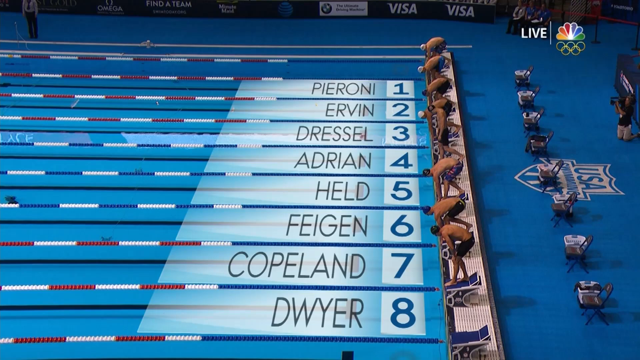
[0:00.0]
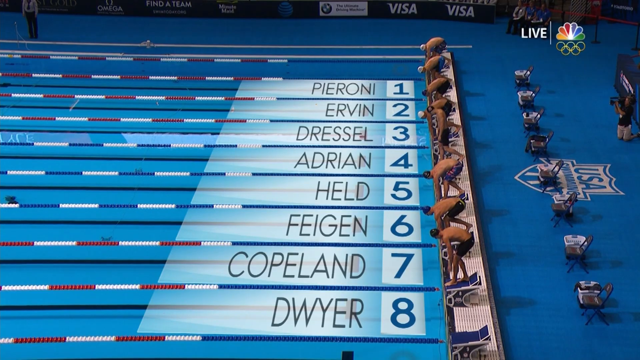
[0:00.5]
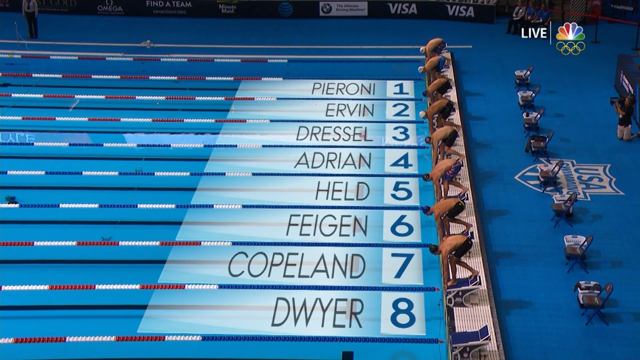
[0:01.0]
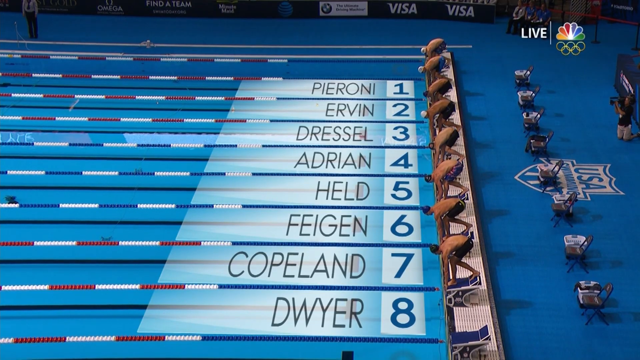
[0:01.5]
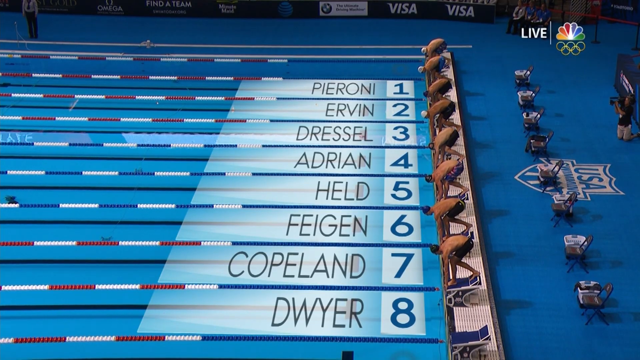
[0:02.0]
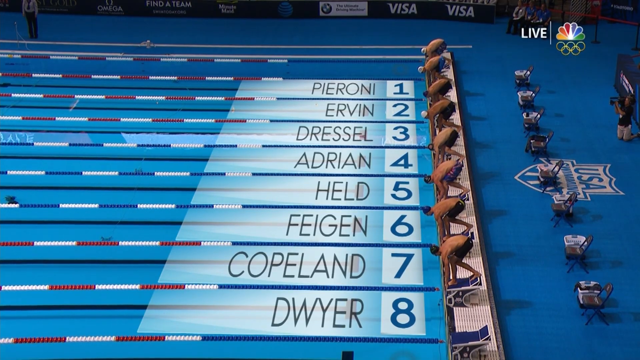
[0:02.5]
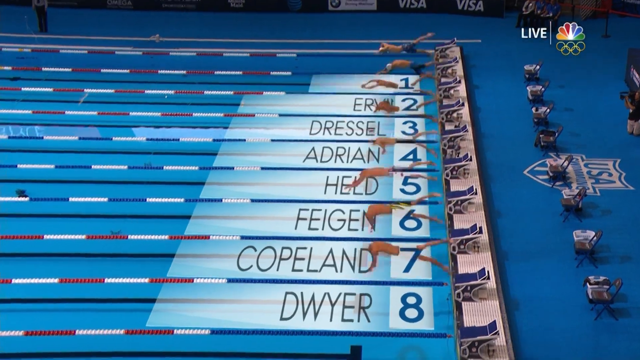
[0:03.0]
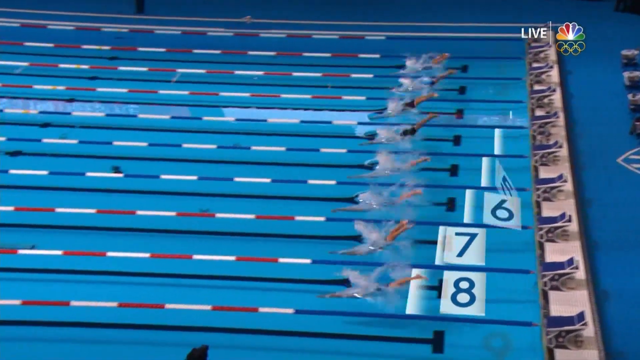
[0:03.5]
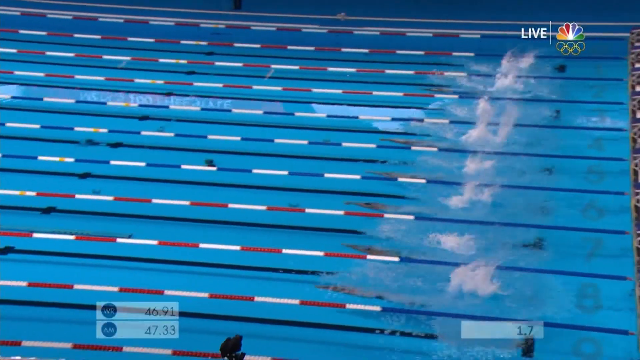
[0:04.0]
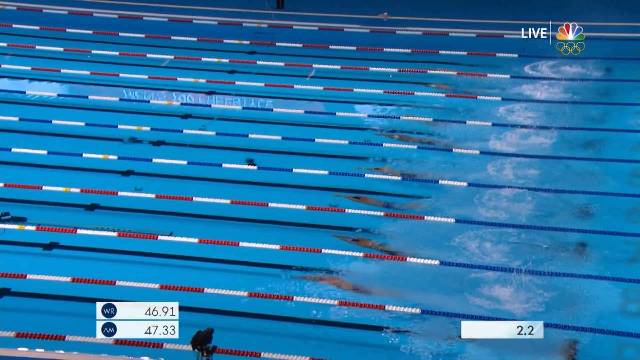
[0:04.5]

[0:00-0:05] A top view shows eight swimmers side by side in an Olympic swimming pool, getting ready to dive in to begin a race. The pool water is blue, and the ground surrounding the pool is also blue. There are chairs behind each of the swimmers. To the right, a camerawoman is on her knees viewing the swimmers. The swimmers are numbered 1 to 8, with their names written beside their numbers. They dive into the pool and all start to swim away. In the lower left corner of the screen, the world record is displayed at 46.91 seconds, along with an American record at 47.33.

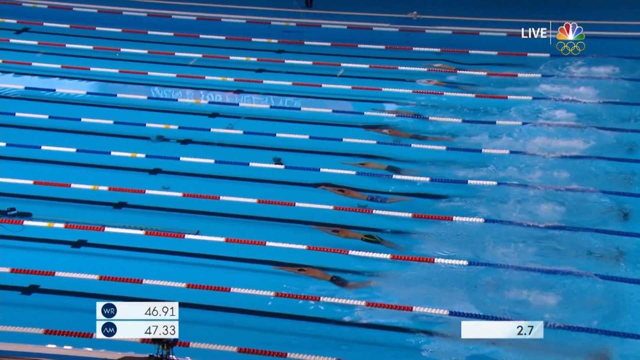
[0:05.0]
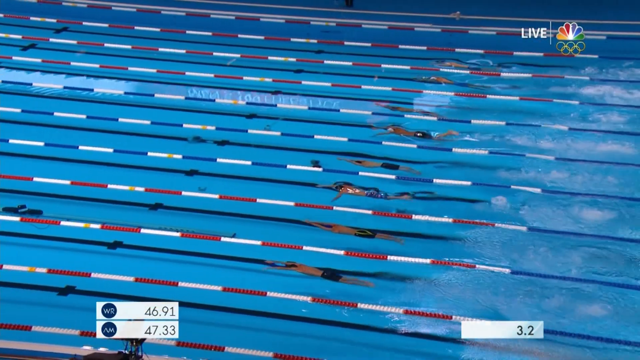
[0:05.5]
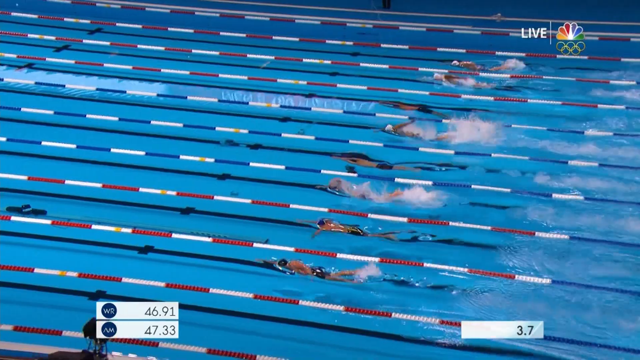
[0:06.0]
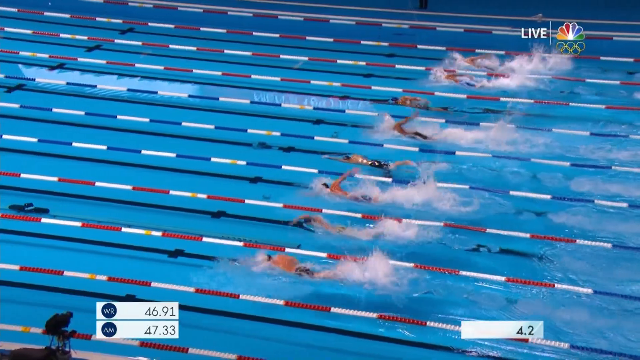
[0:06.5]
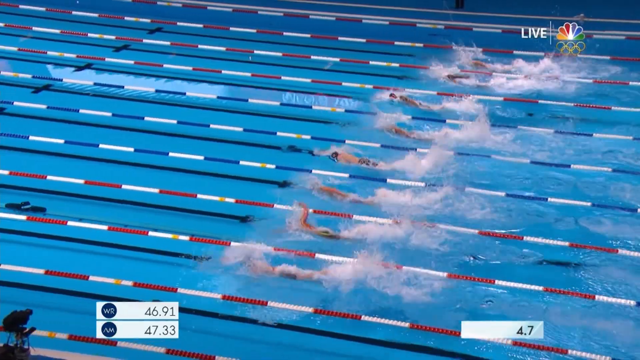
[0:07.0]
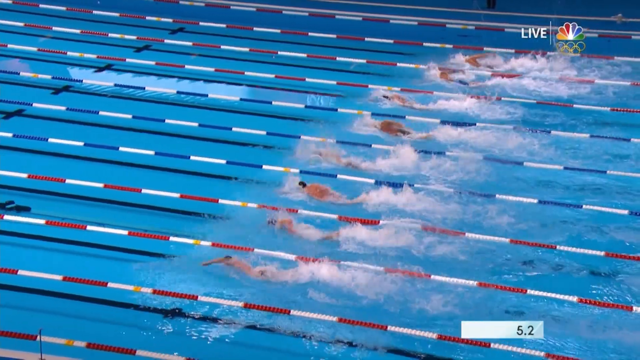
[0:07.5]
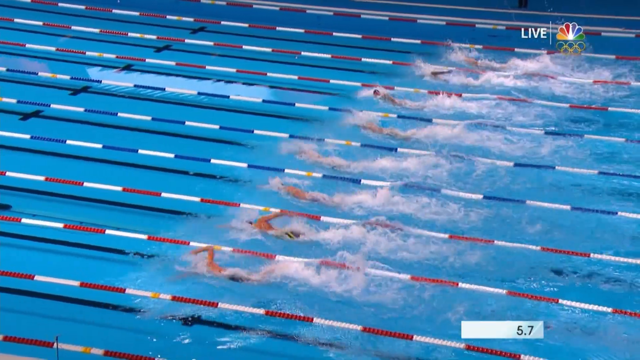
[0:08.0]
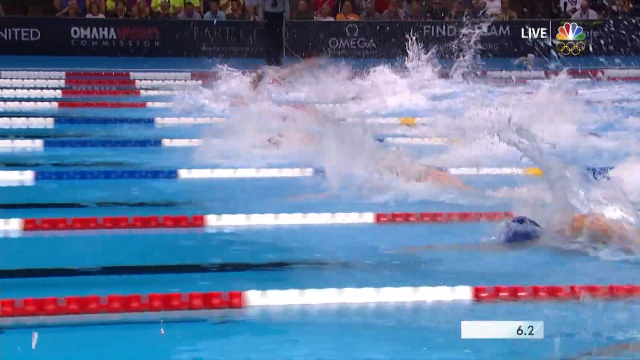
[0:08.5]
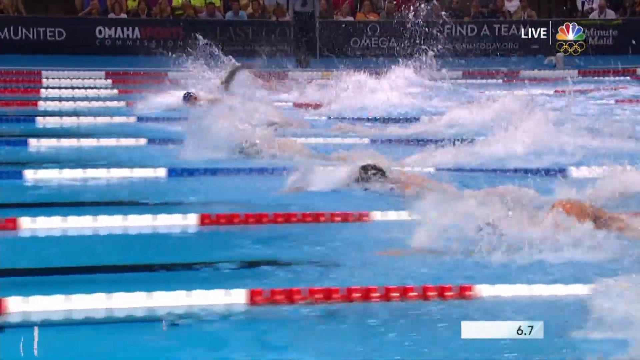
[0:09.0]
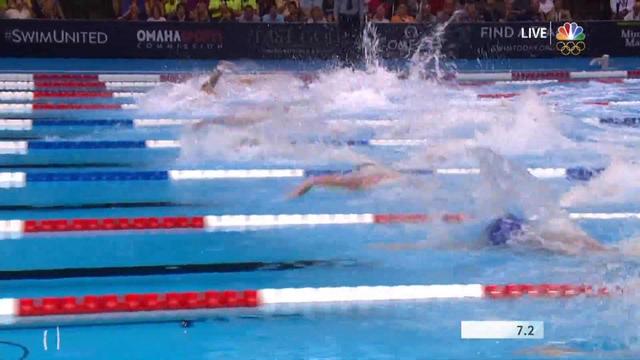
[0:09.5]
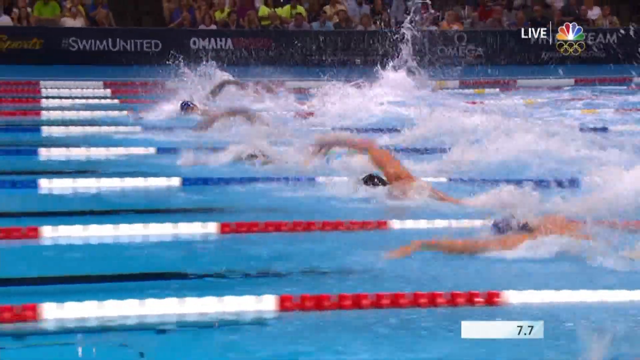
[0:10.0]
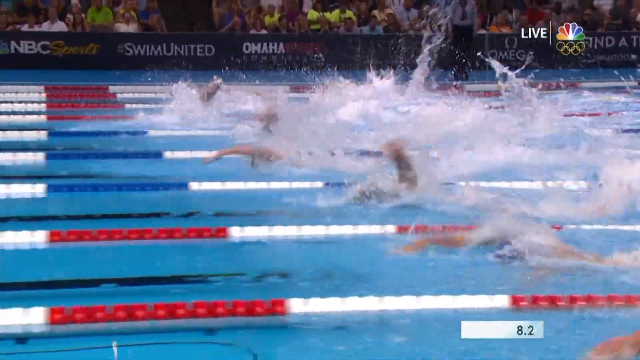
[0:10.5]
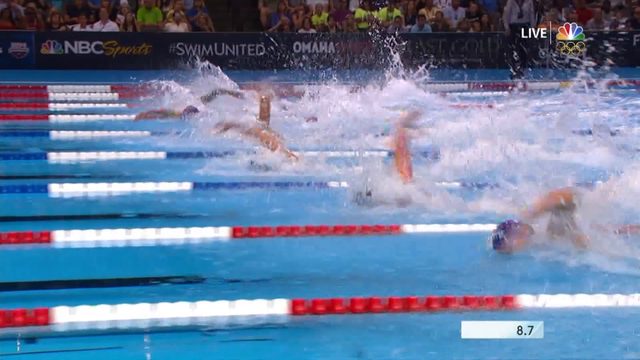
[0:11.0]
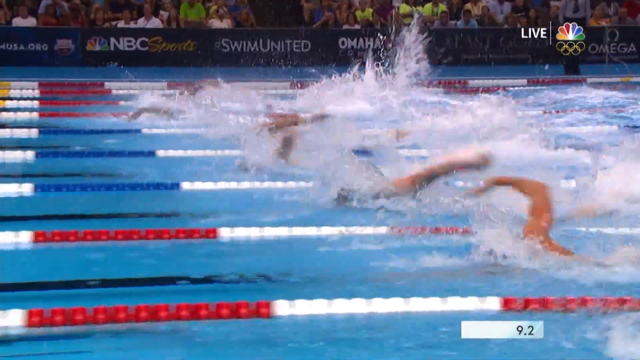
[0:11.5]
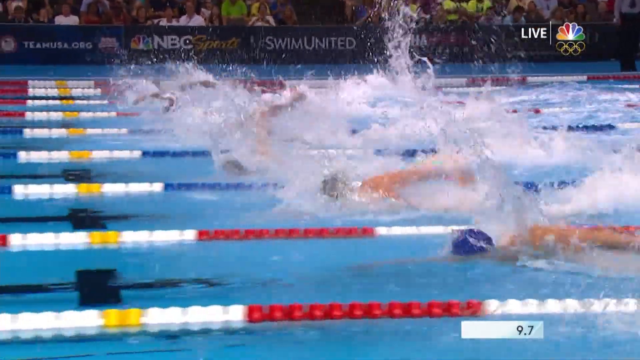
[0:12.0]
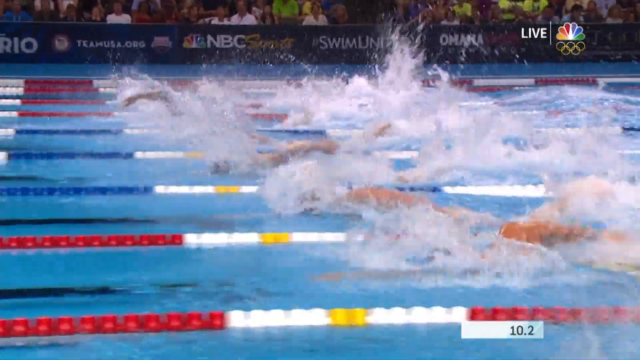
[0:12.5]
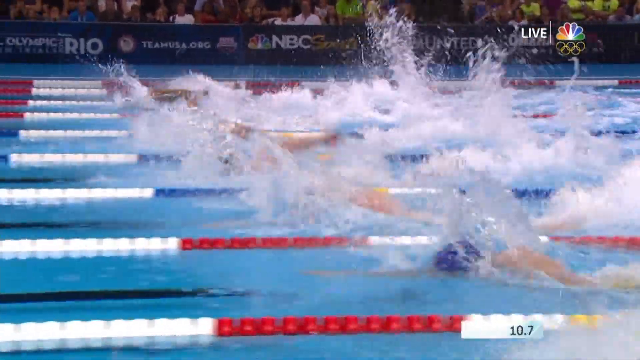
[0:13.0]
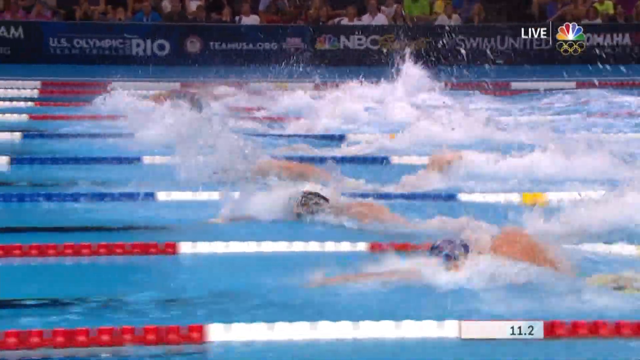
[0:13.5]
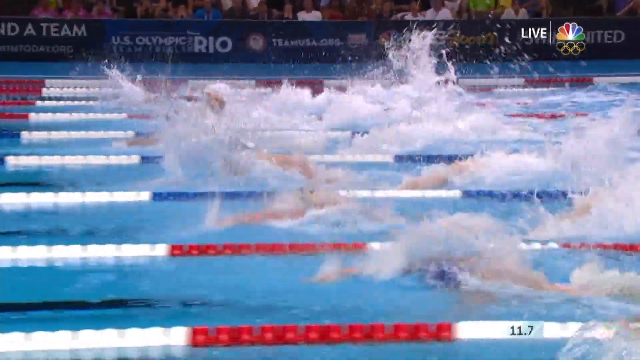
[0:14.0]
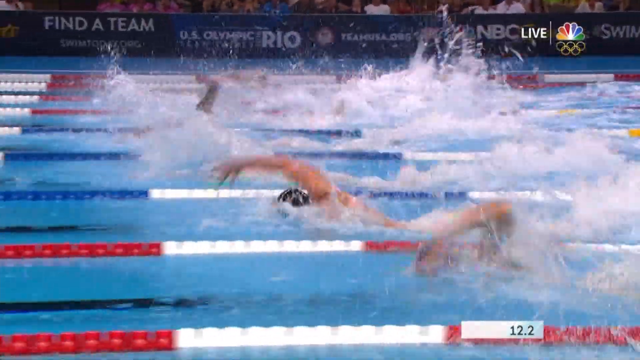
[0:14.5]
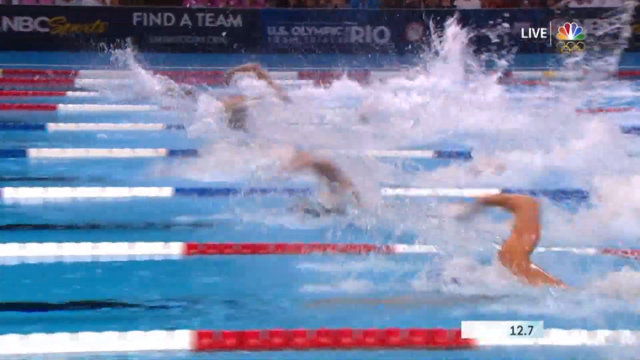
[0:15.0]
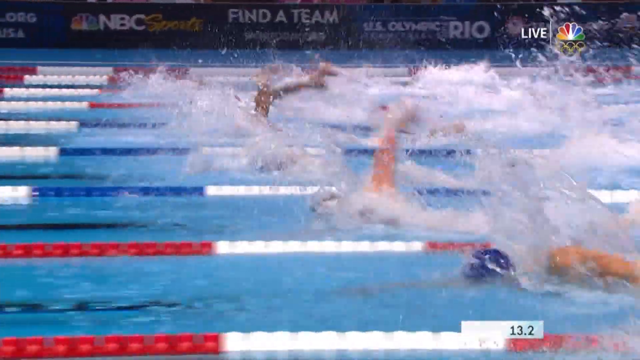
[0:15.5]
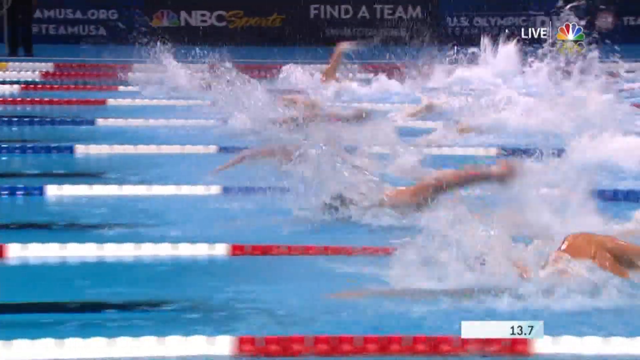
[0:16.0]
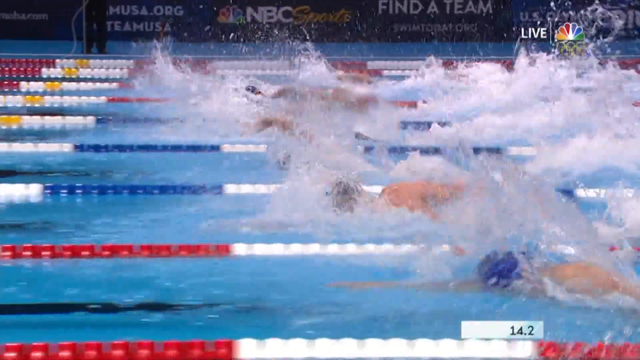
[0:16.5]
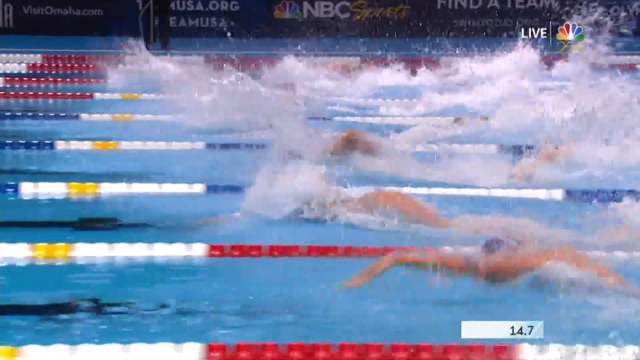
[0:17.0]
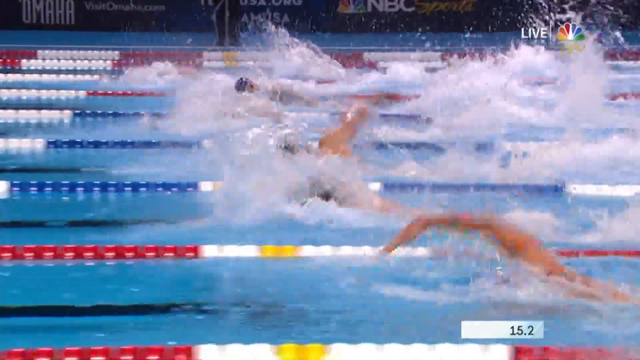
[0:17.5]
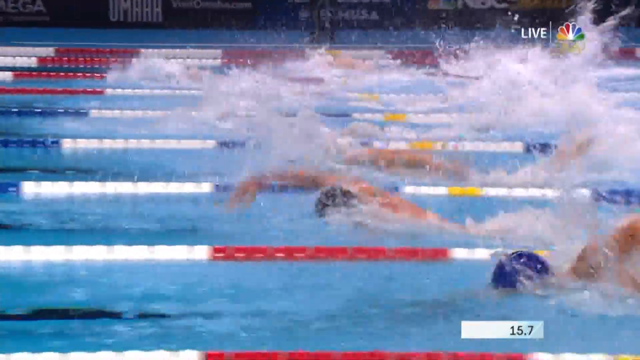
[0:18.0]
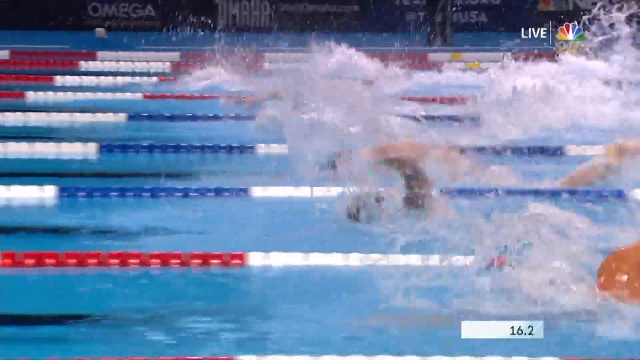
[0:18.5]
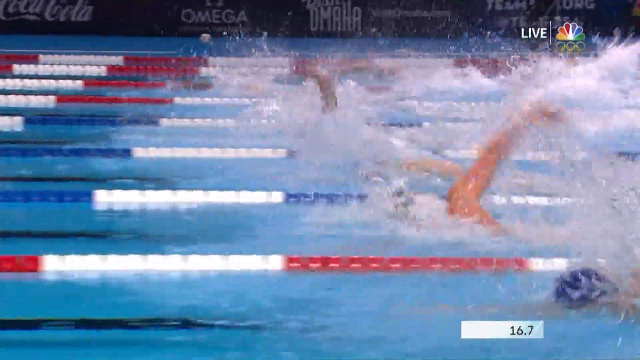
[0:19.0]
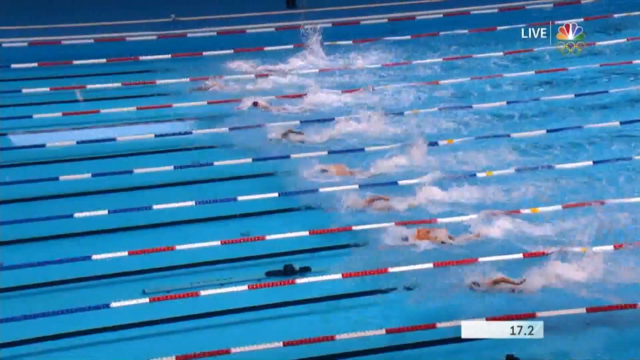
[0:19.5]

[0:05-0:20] The swimmers swim away, cleaving through the water. The swimmers in the middle lane look as if they are faster than the swimmers in the outer and inner lanes. The lanes are divided by lane barriers, lines floating in the pool in red and white and in blue and white. The swimmers make a lot of splash. In the upper right corner of the screen, the word "live" is written in white, along with the Olympic logo and the NBC network logo. A time in the lower right corner of the screen records the time spent swimming.